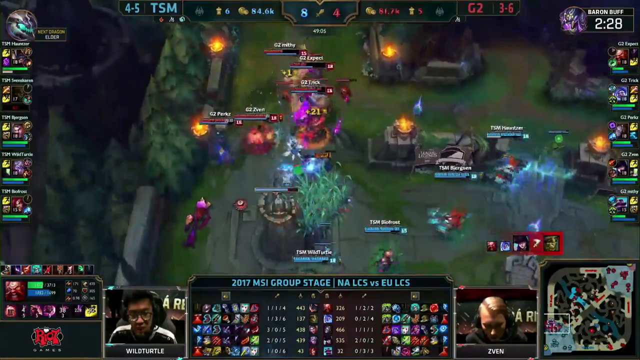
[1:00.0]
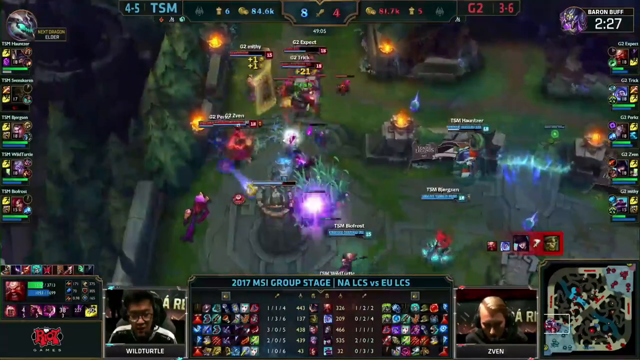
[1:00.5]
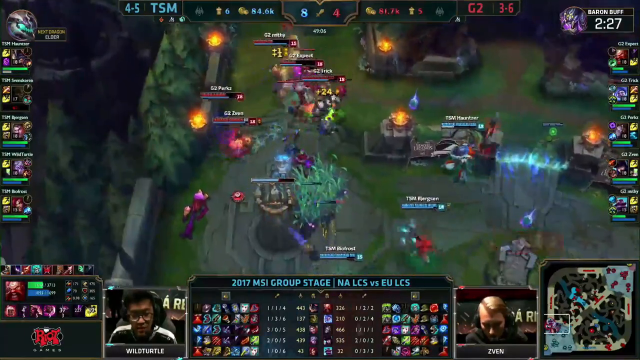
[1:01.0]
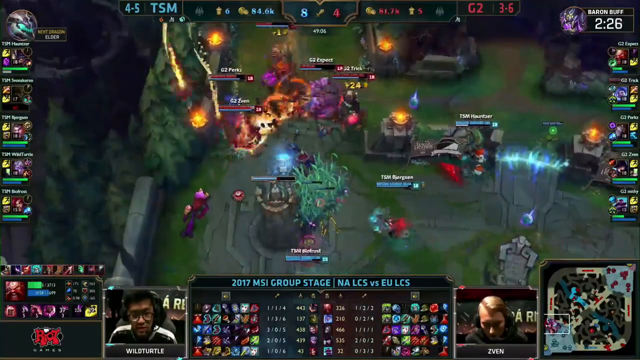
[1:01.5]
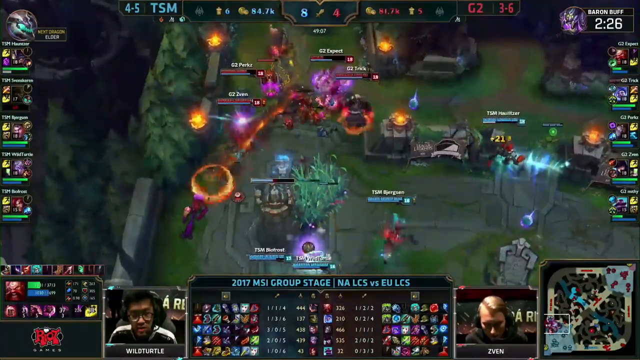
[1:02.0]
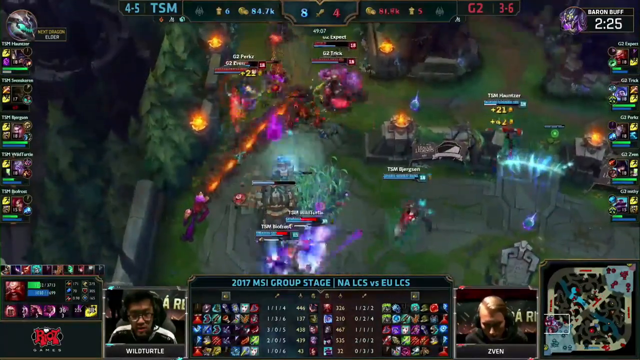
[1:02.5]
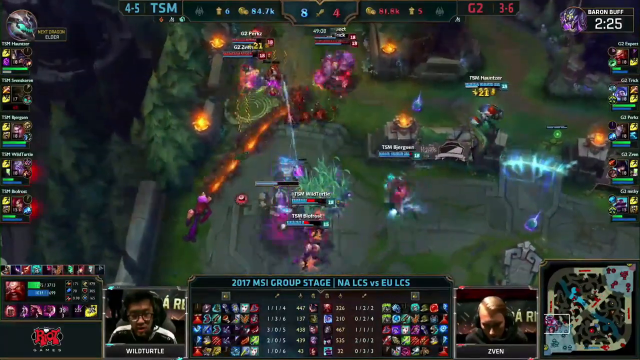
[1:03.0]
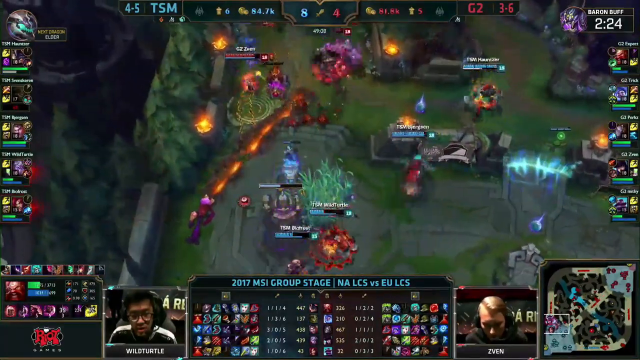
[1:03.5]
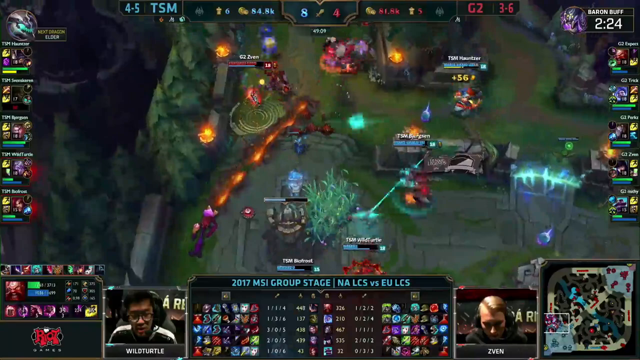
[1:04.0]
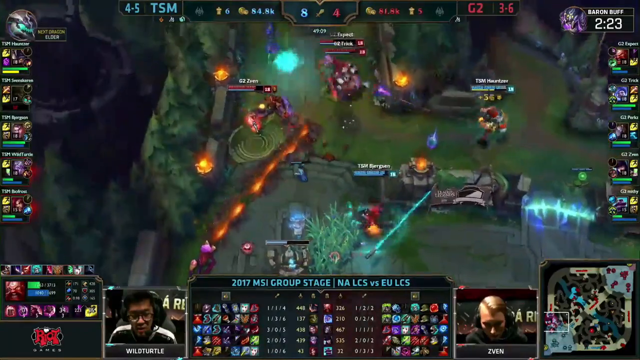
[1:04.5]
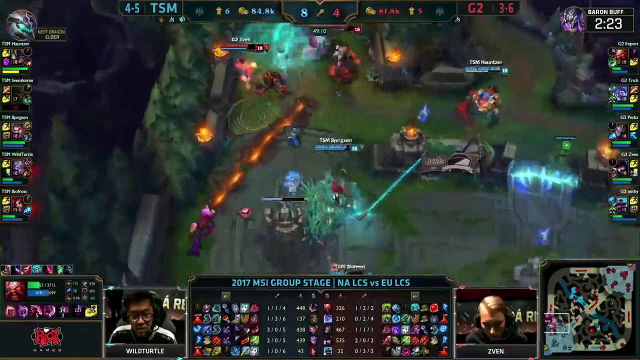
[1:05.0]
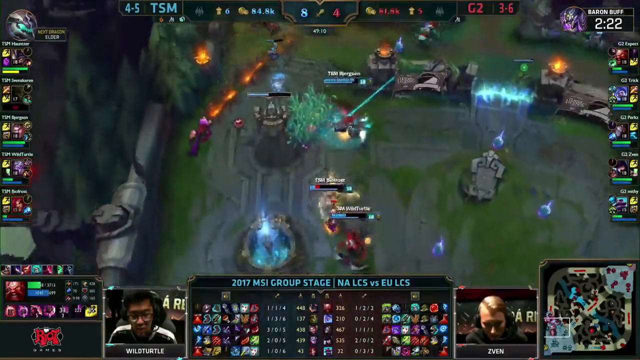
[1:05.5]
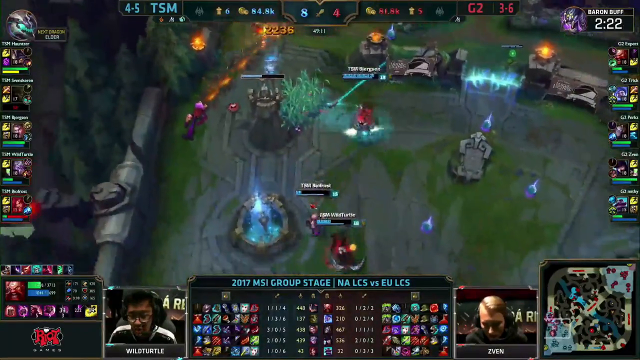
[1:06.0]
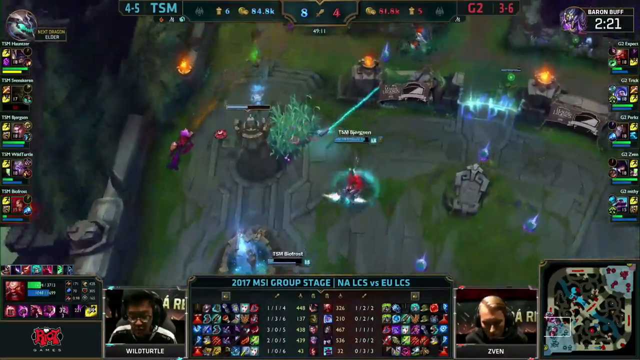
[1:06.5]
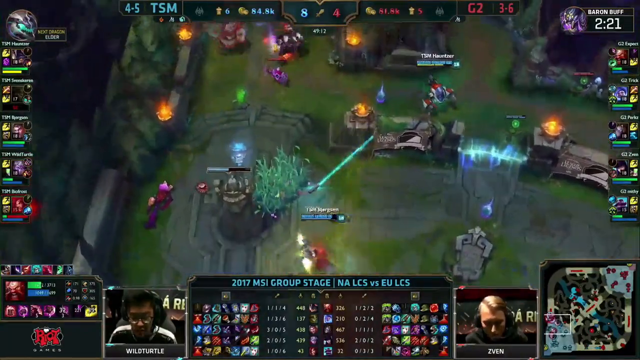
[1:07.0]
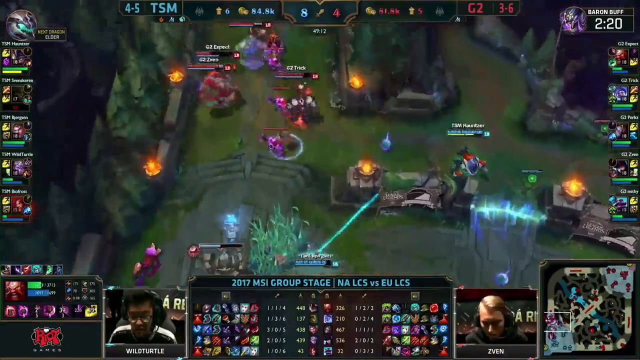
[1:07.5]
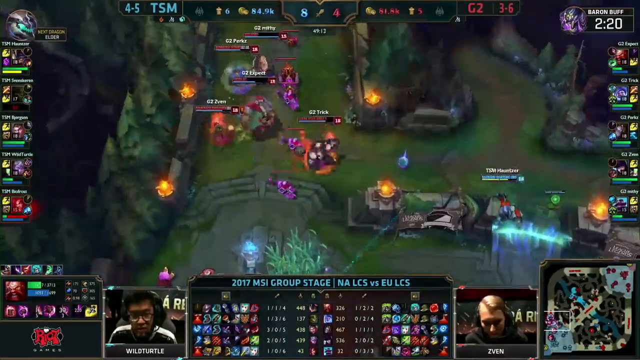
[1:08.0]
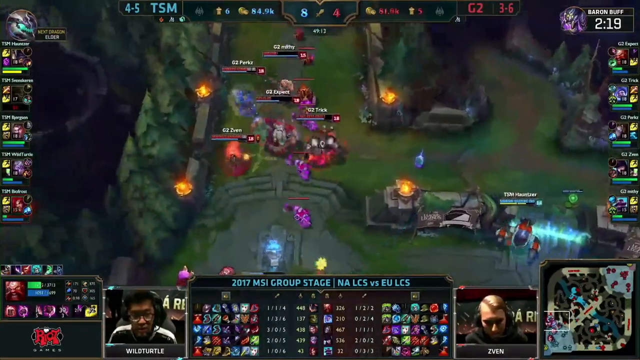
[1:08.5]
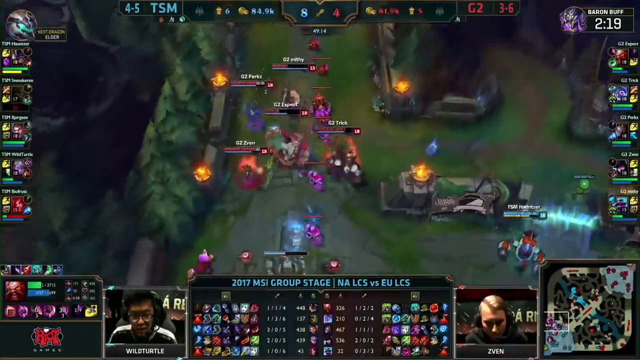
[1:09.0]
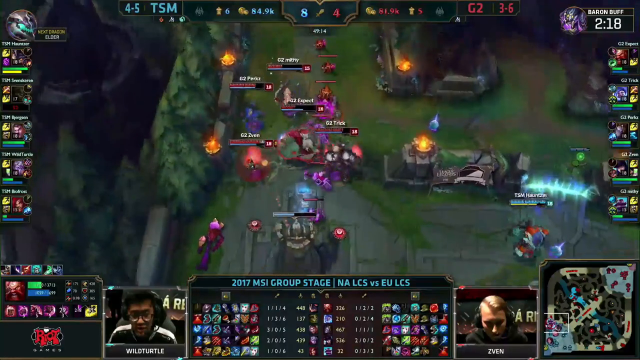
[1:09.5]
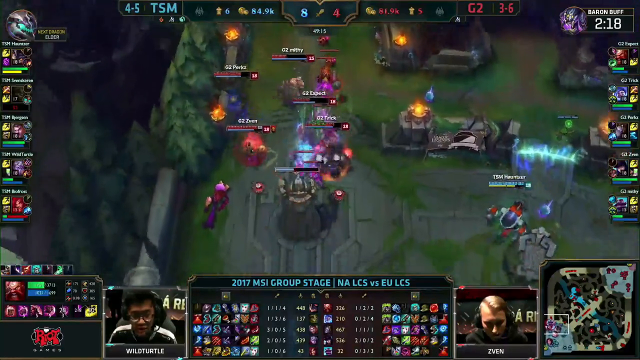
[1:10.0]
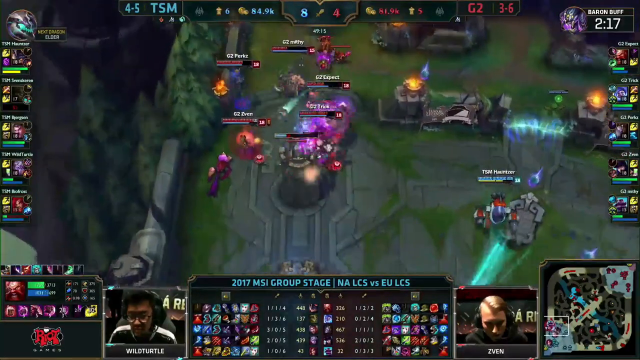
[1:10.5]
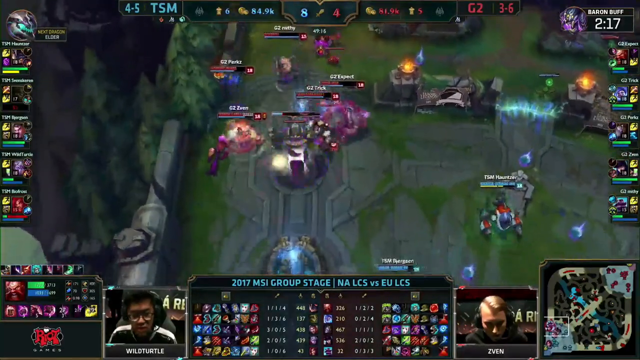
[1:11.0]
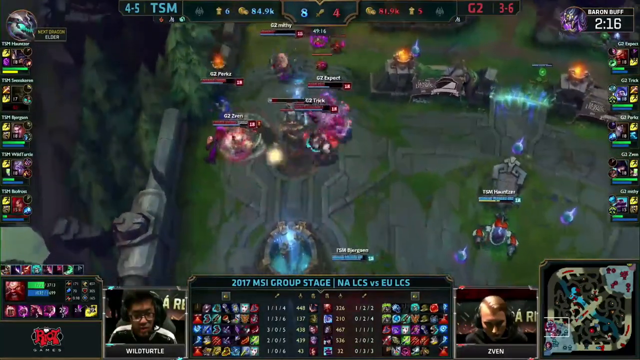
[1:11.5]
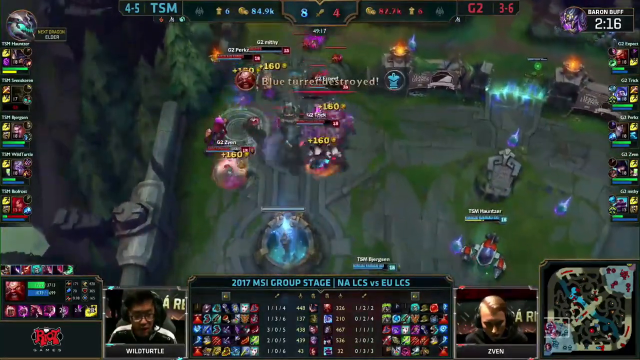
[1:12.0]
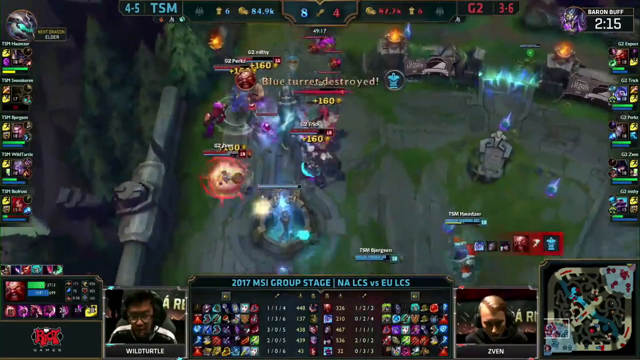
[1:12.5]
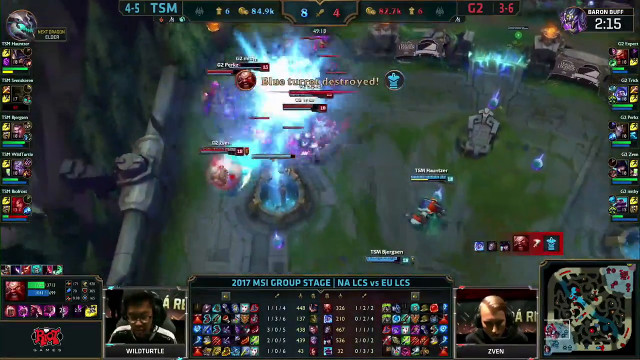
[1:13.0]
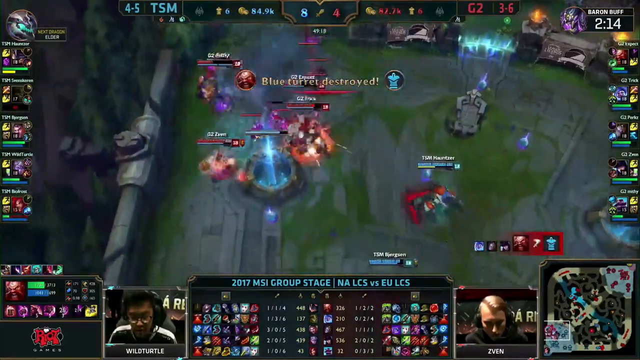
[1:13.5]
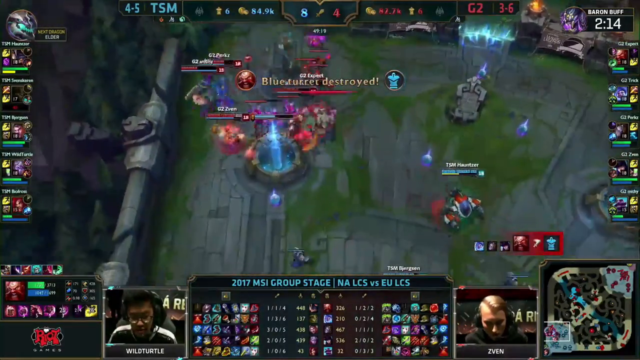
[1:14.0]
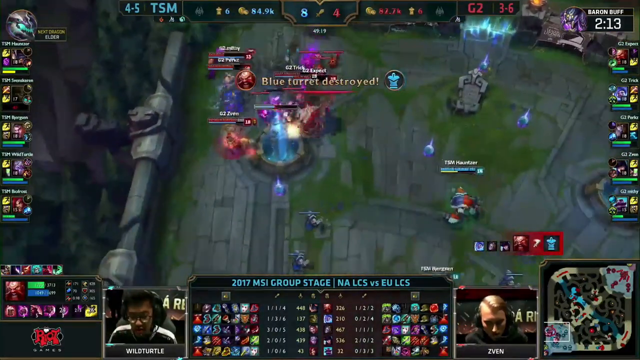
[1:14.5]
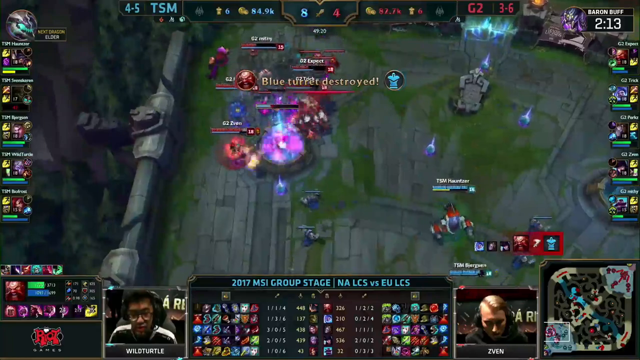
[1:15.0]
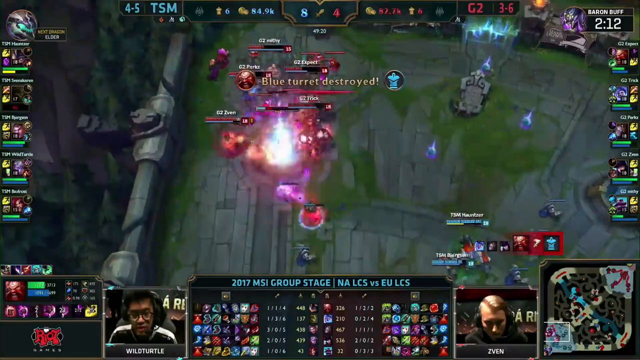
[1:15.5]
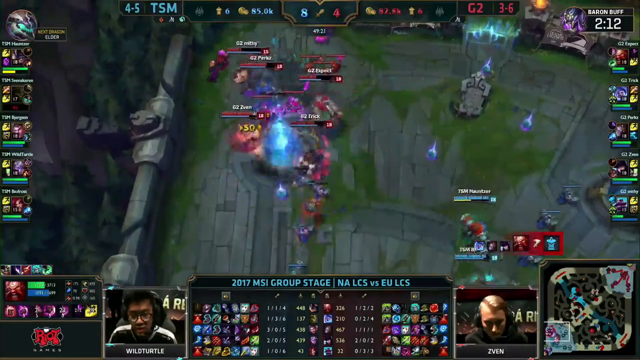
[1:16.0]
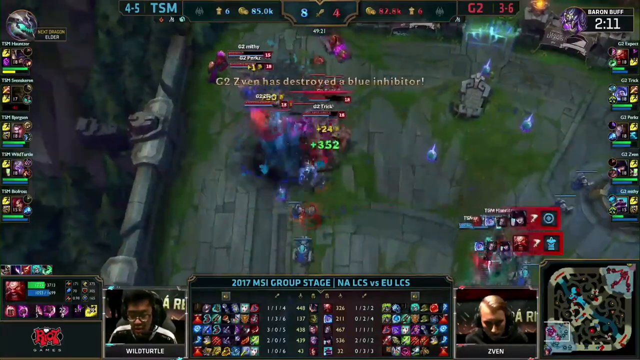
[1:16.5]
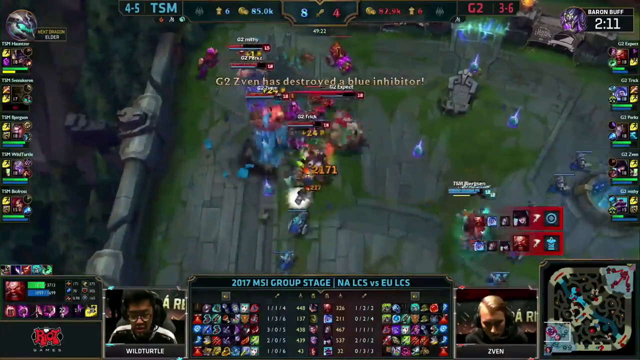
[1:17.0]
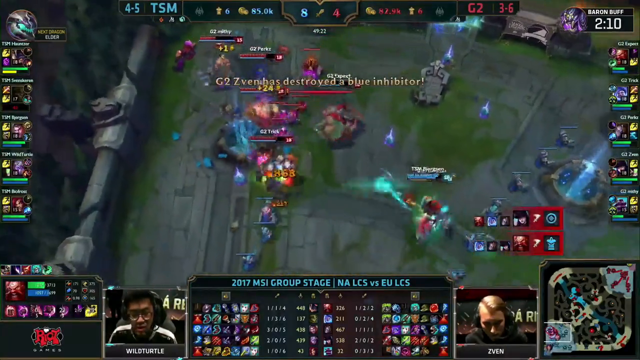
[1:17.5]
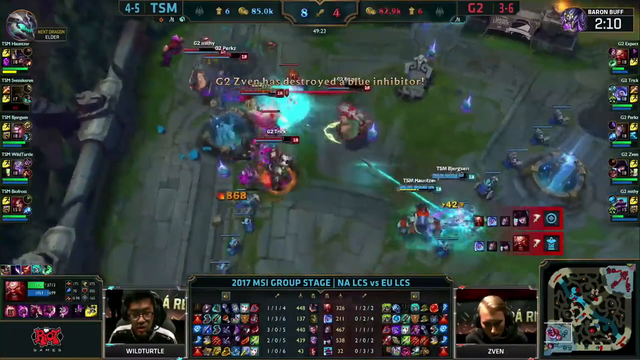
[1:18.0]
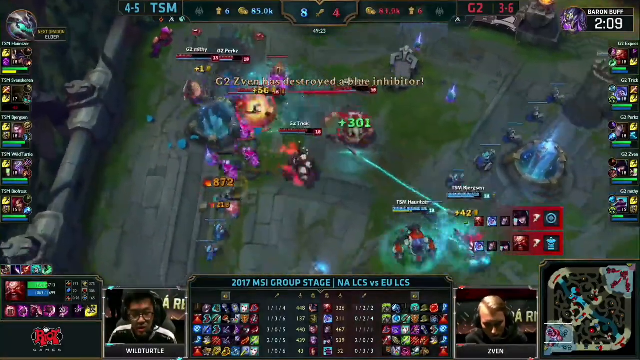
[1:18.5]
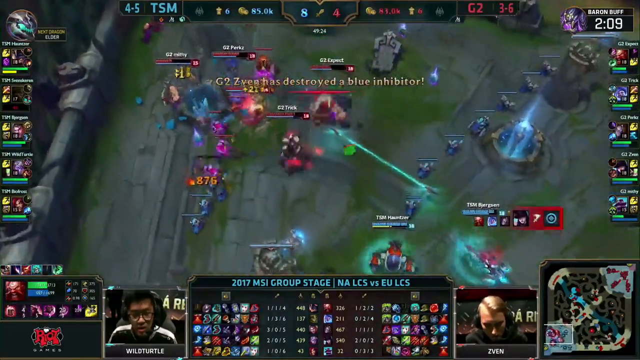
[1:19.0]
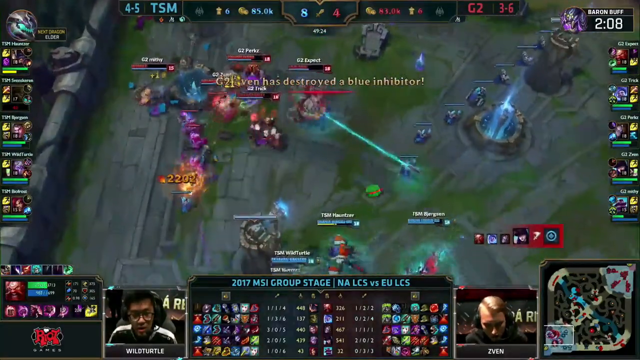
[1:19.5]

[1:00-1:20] In the southern part of the map, the teams fight for control of castle areas lined with flaming braziers. Many player characters fight and smash into blue beacons, taking them out one by one; these appear to be where the creepers spawn. The creepers here are green. No subtitle text appears this time. Long strips of flame shoot out, and glowing blue energy barriers are visible. The team whose dominant color is purple appears to be winning this portion against the team whose dominant color is blue, taking control of the map. "Bastion bluff" appears in the upper right corner with a timer counting down from around 2:28, not going below the two-minute range. The esports players, wearing headsets, stare downward at their screens. WildTurtle appears more intense and stressed, with his head up instead of tilted down as before.